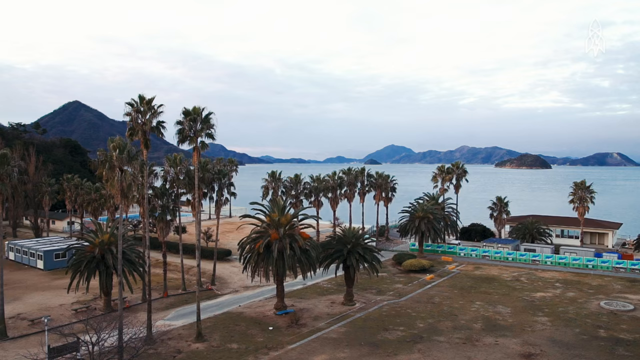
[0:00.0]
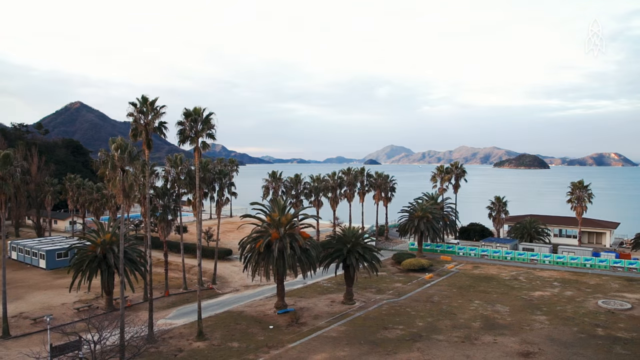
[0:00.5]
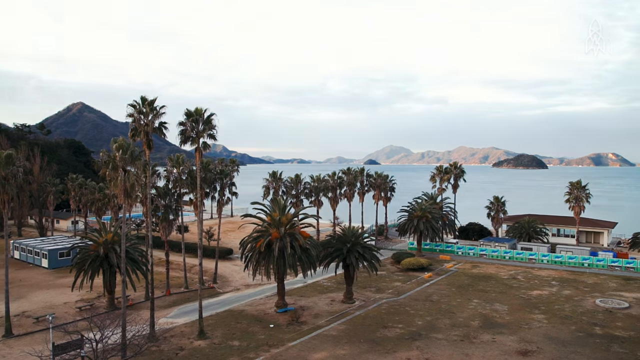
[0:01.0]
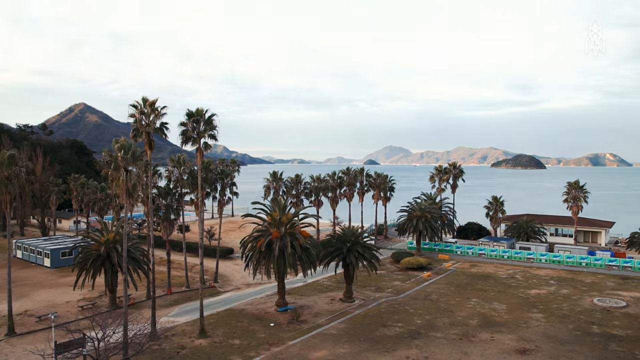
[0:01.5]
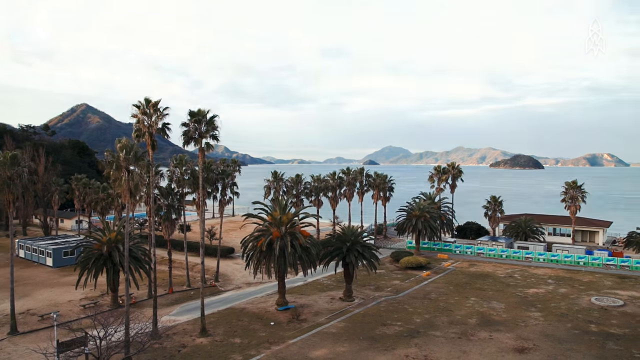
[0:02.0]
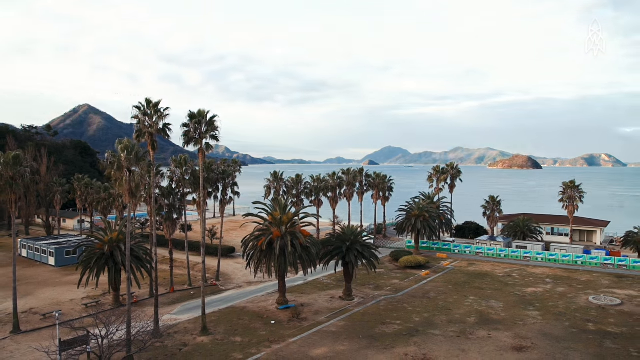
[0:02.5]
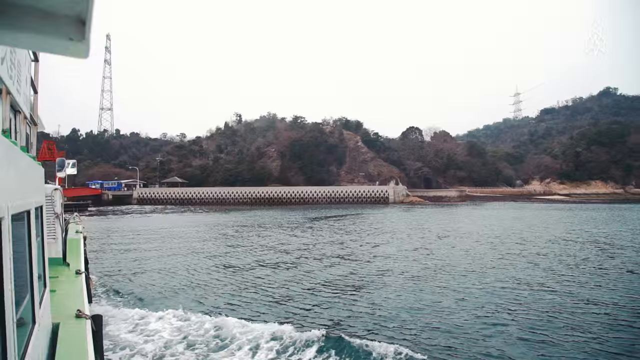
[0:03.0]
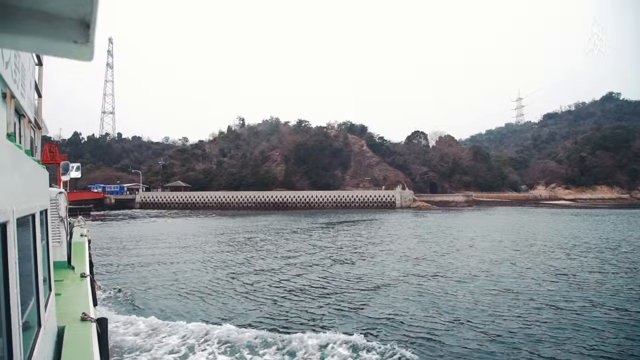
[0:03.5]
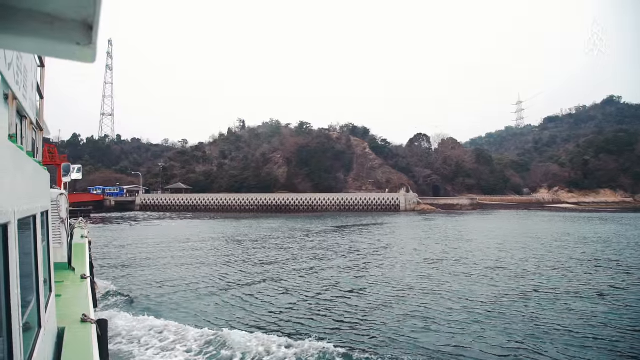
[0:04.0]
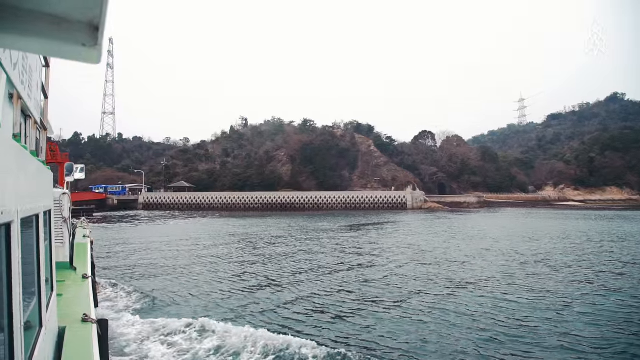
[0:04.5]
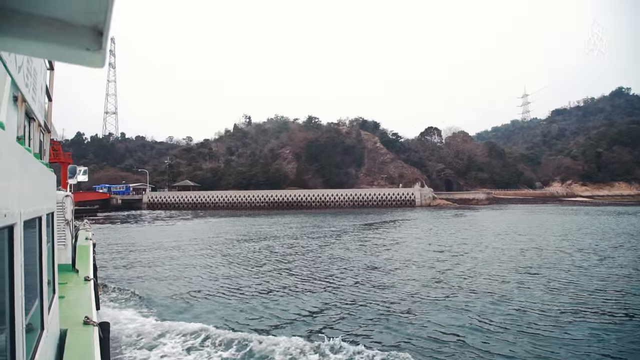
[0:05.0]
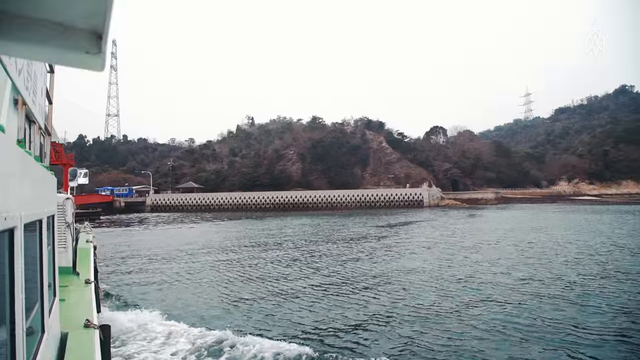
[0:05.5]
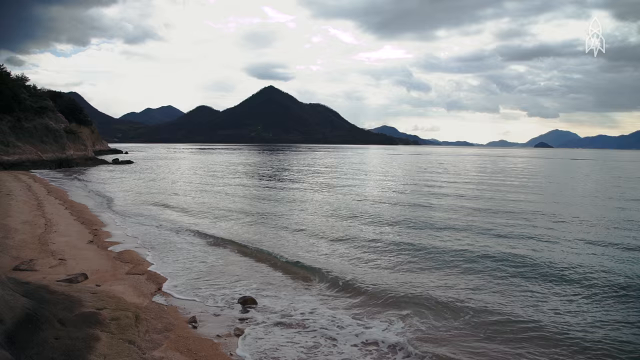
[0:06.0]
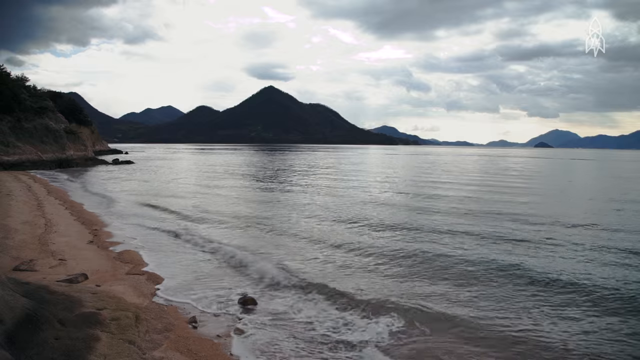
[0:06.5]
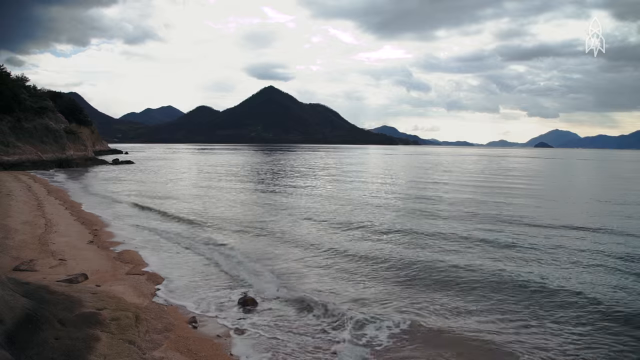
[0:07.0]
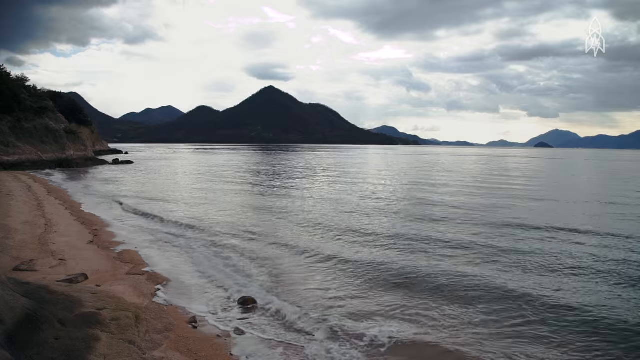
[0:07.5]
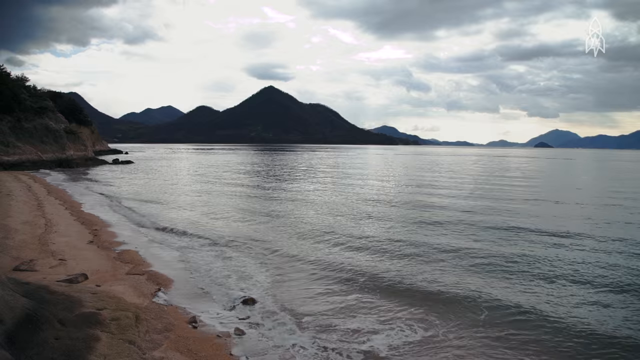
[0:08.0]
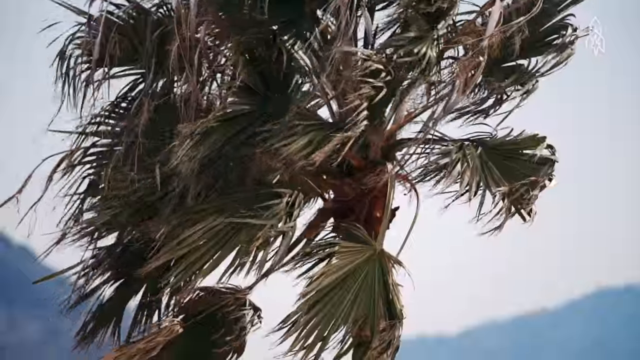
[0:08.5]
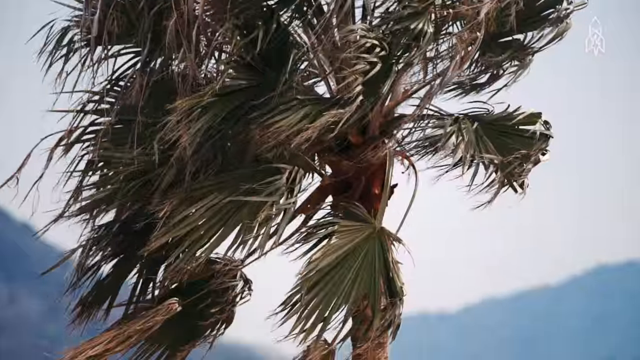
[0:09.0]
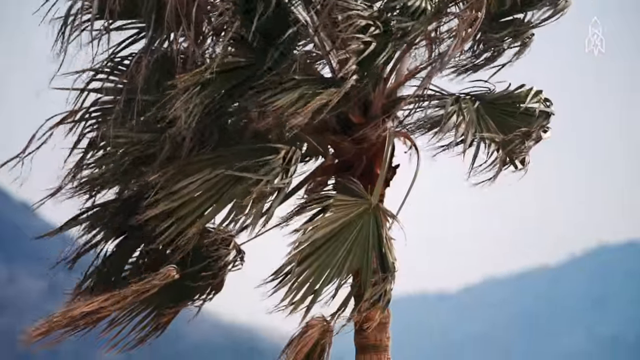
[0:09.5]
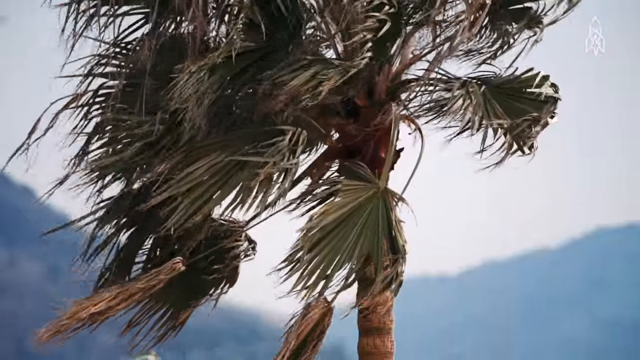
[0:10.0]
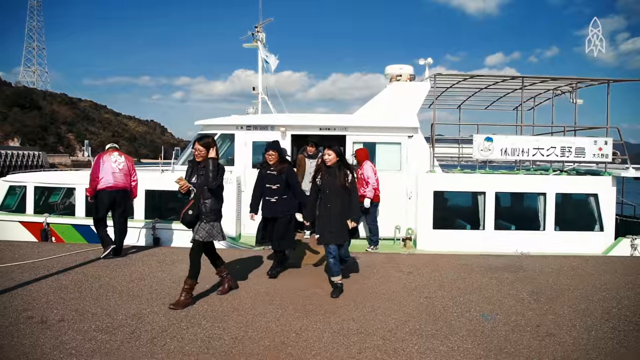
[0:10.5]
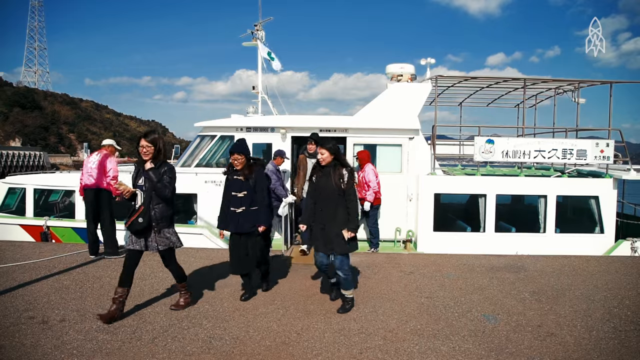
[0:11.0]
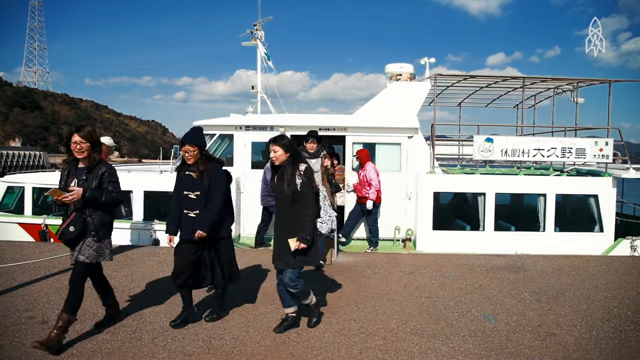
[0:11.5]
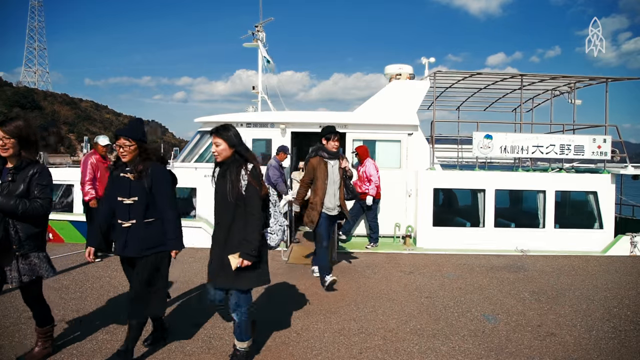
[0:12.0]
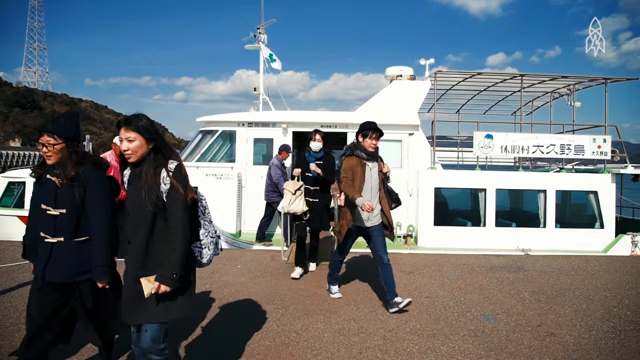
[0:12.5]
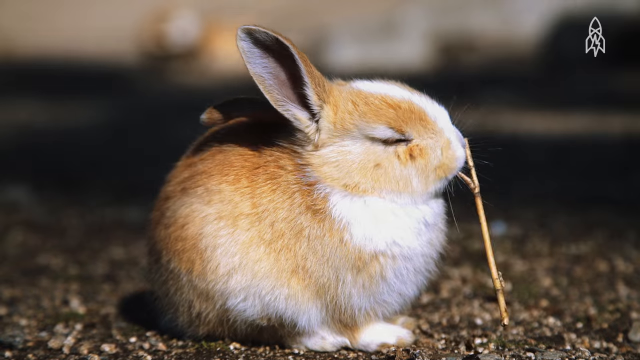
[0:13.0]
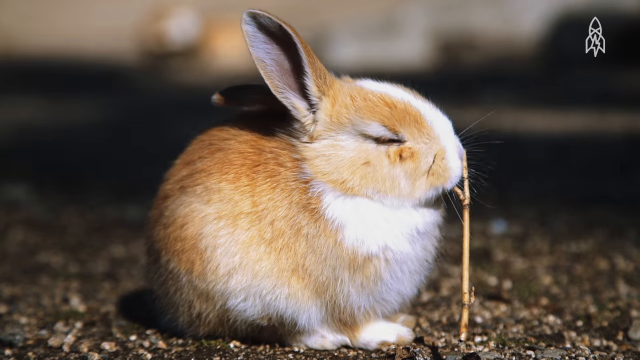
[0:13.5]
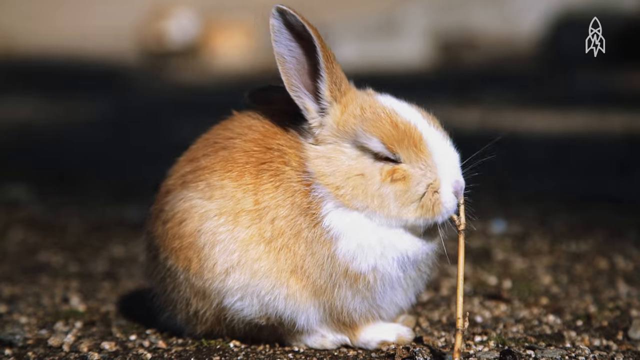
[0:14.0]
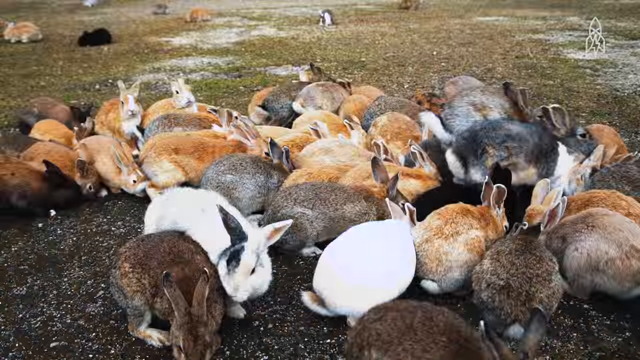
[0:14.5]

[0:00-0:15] The setting looks like a beach, with many palm trees and an area of water. A ferry is there, and a couple of people come out of it wearing jackets. Another shot shows some rabbits together. The place is possibly a tourist area, and the footage shows the land, the sea area and the landscape. There are many palm trees, and the river is blue and clean. At the end, a rabbit chews on a stick.